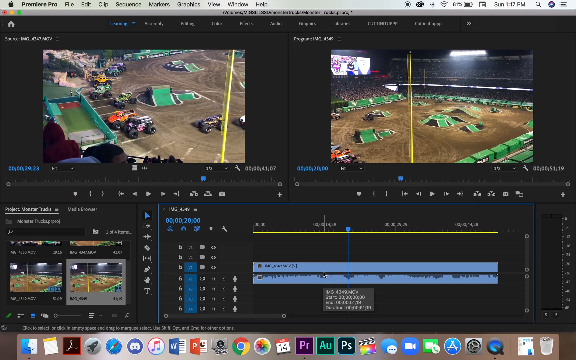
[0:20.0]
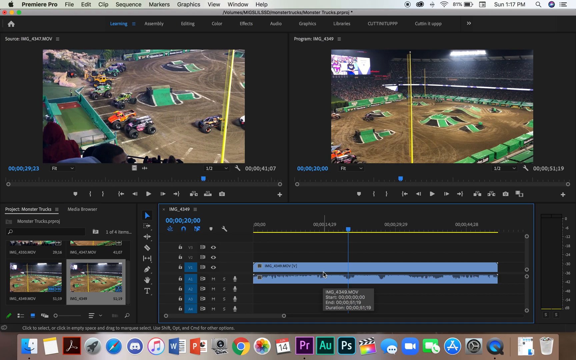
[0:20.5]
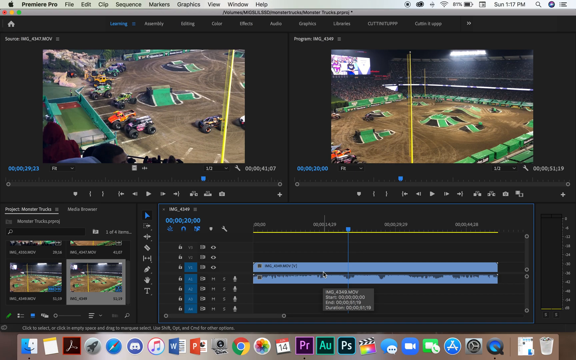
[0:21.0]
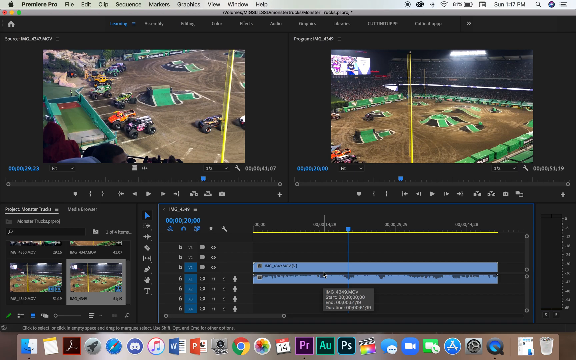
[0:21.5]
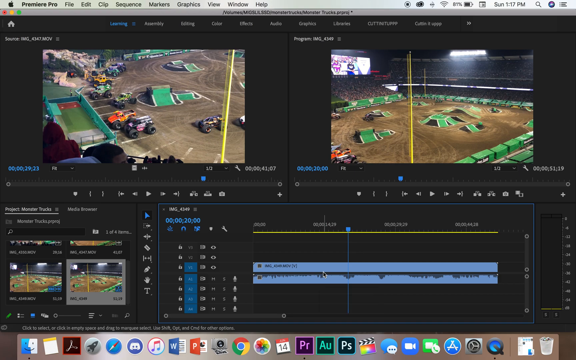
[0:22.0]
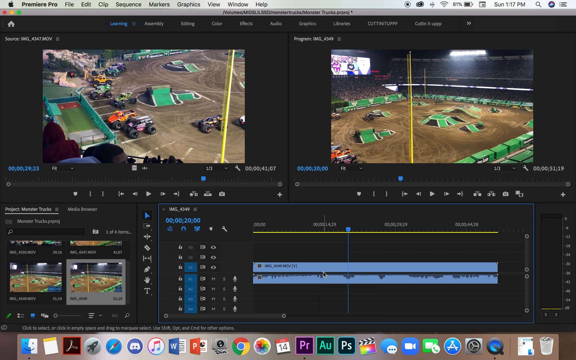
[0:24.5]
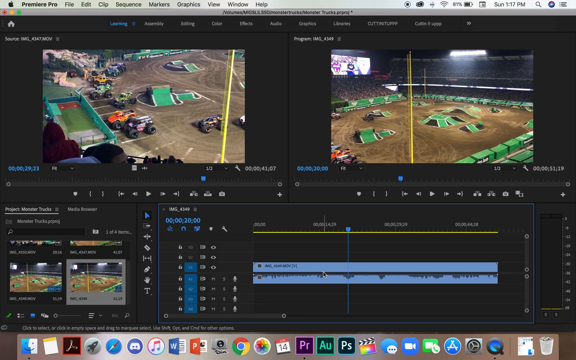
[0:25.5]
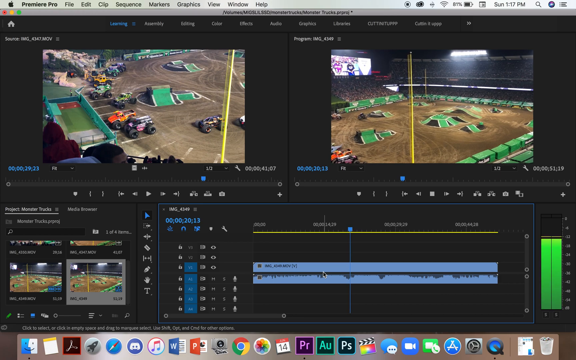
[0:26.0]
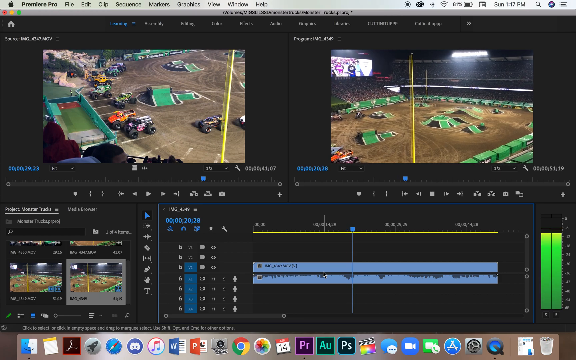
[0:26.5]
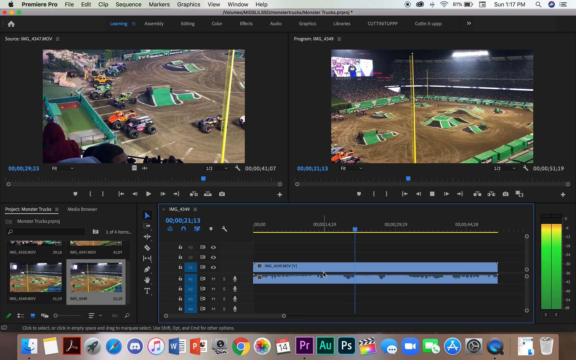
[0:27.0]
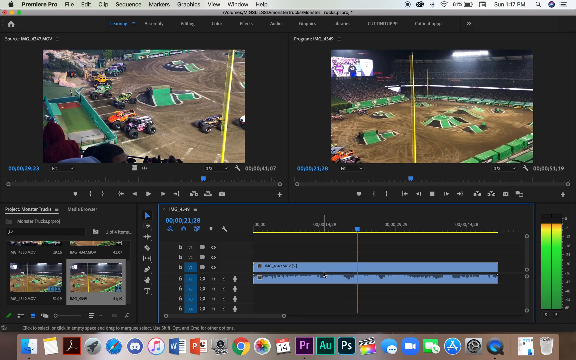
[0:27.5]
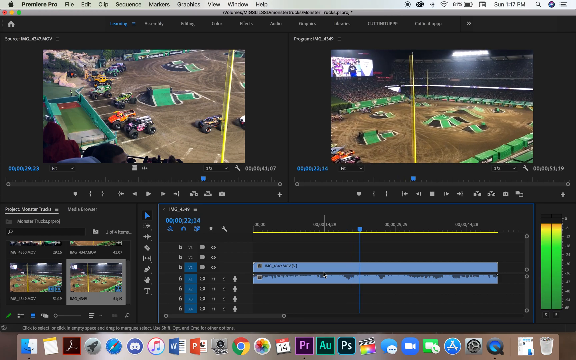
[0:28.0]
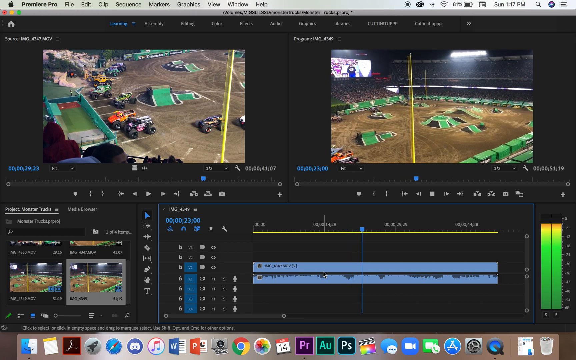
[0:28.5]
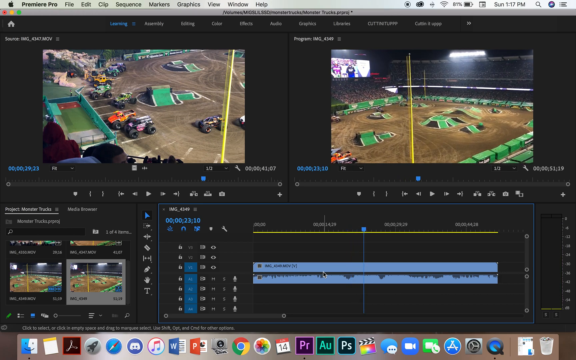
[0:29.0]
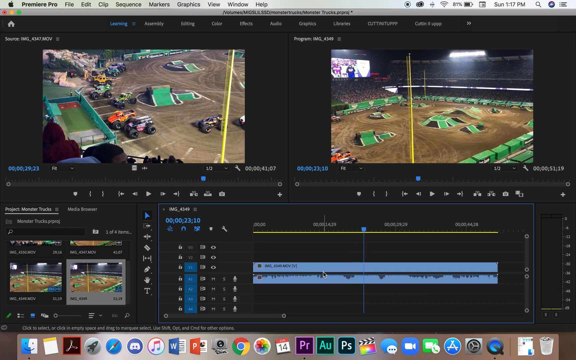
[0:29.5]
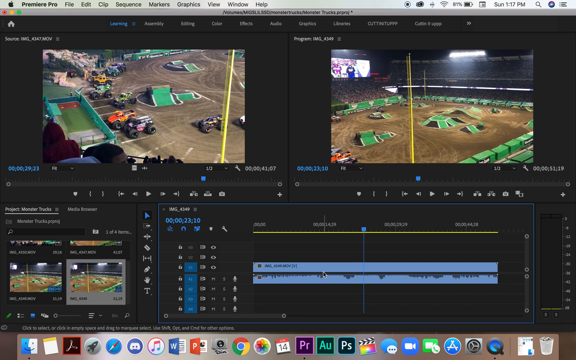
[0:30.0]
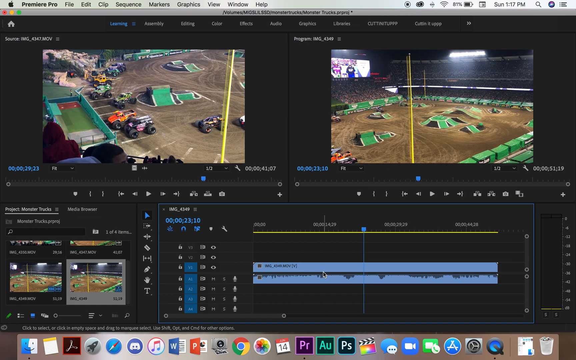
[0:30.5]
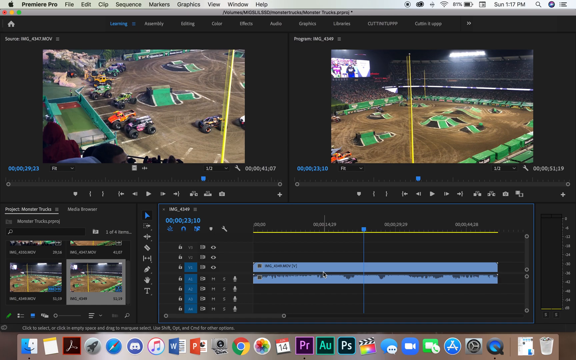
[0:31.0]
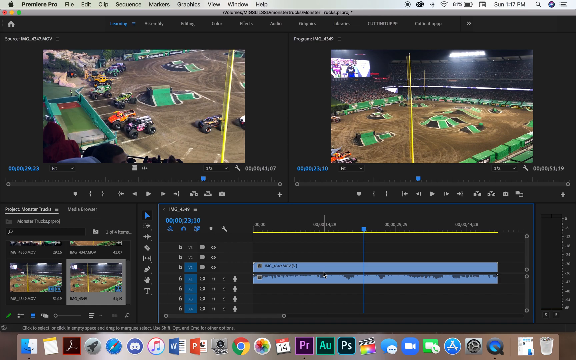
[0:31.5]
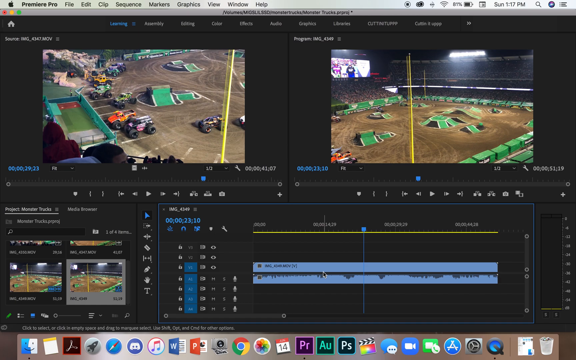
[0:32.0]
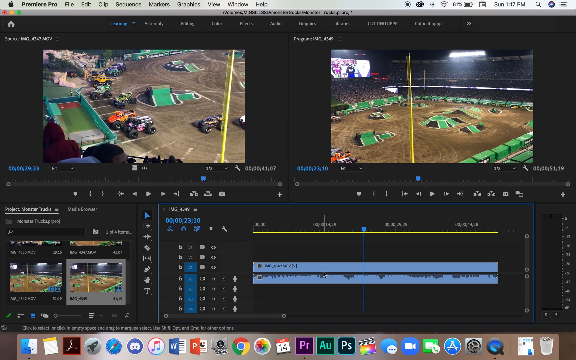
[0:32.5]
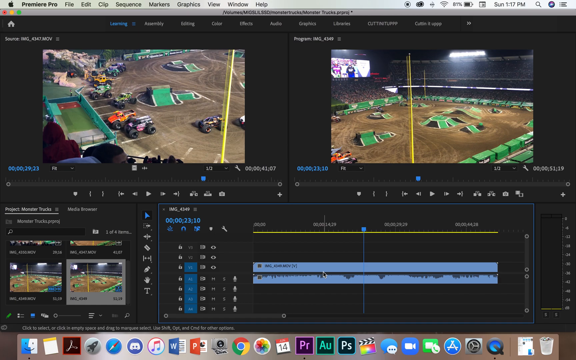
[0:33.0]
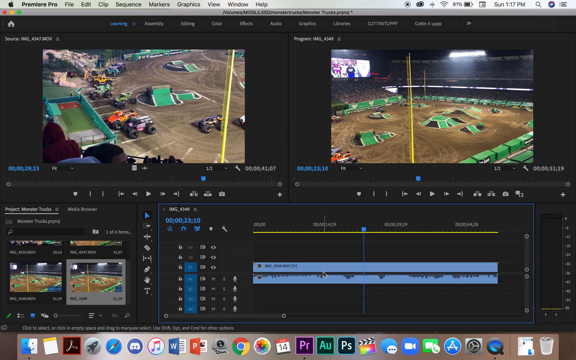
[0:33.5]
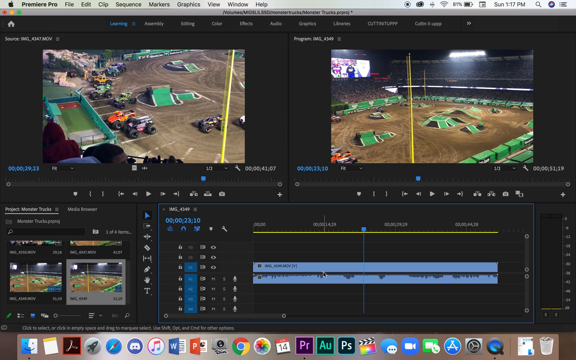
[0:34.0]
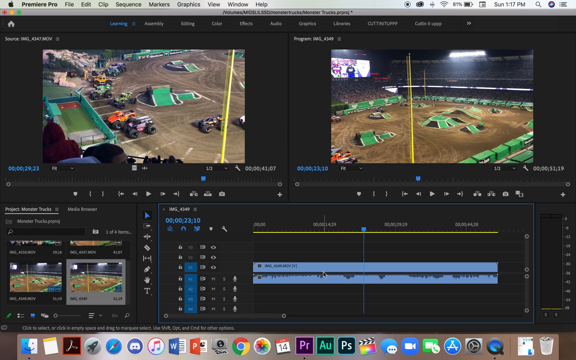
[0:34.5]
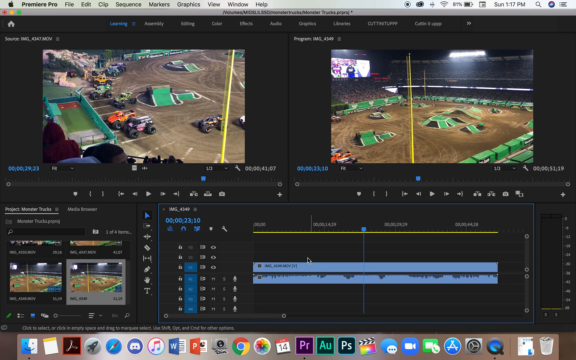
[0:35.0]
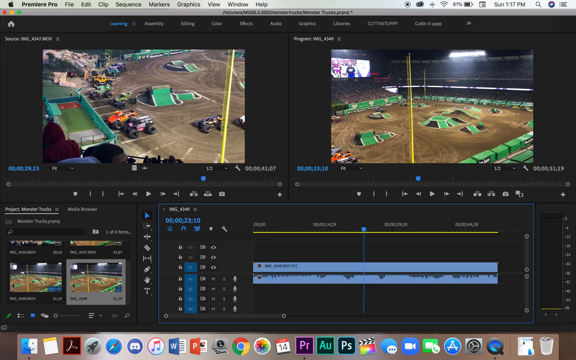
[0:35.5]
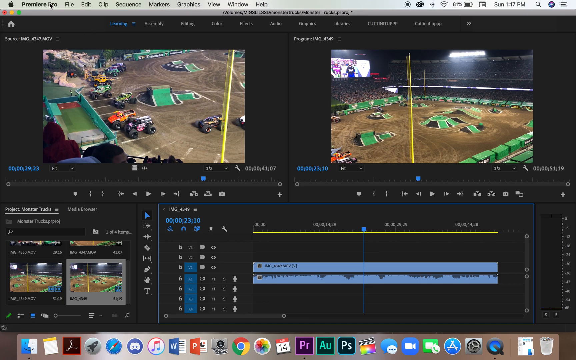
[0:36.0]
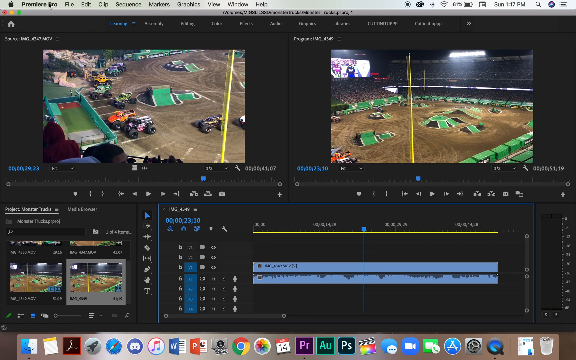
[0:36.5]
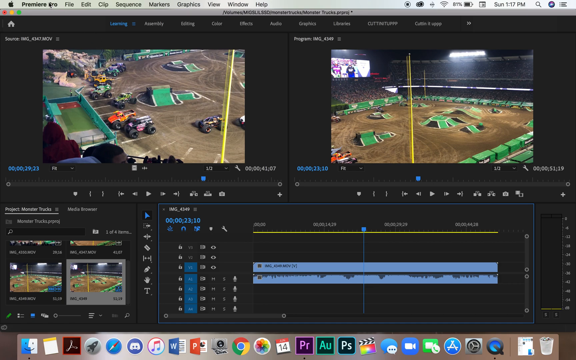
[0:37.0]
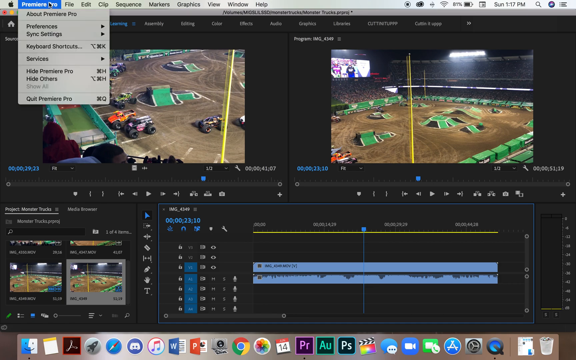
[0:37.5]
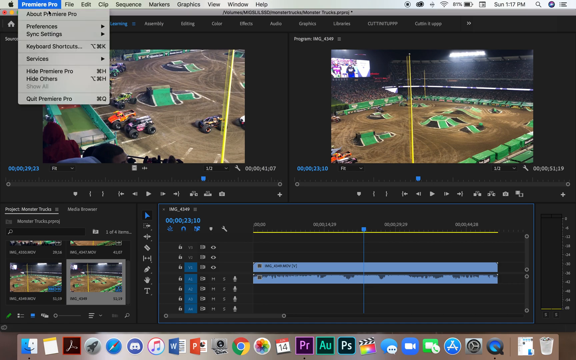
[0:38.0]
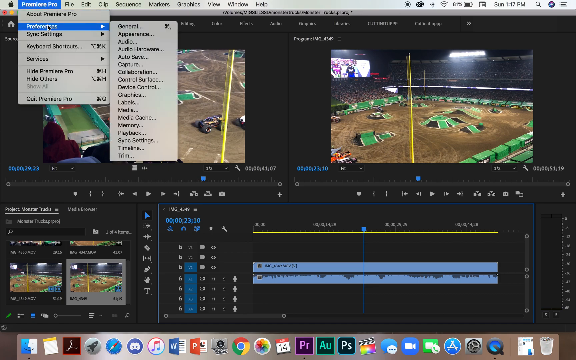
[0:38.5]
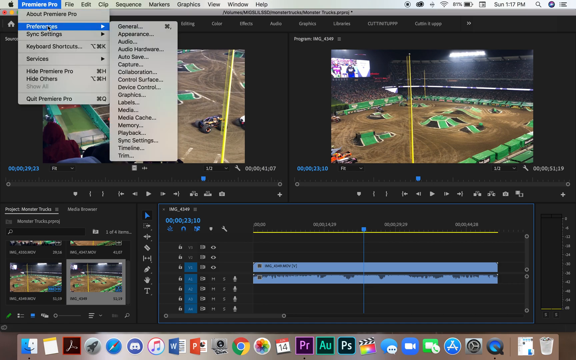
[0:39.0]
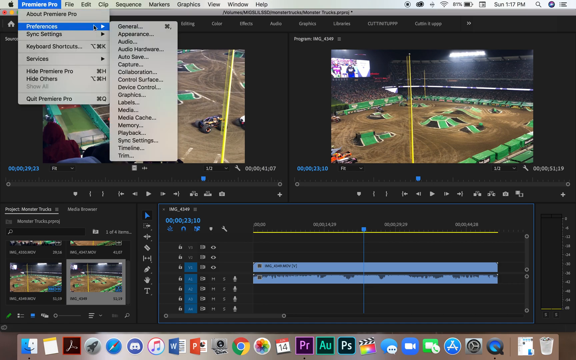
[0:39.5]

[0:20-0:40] The pictures look like video games. There is something like a stadium, possibly bicycle or motorbike racing, with green things the players can ride on, and the time taken is shown. Premiere Pro appears to be open, with volume levels going up and a line showing the volume levels of the game's sound, but it is no longer moving. In the game, which looks well recorded, there is a stadium with people watching, and big 4x4 cars with big wheels: an orange one, a green one, yellow, blue, and yellow with black.